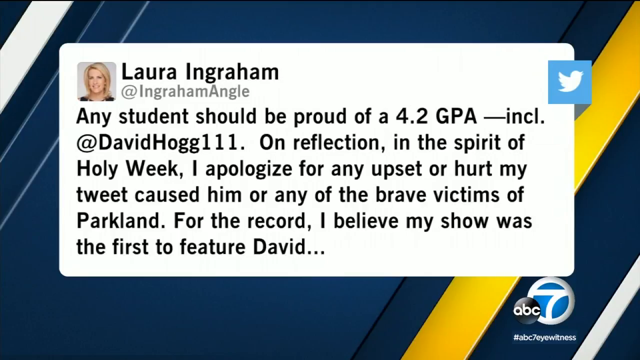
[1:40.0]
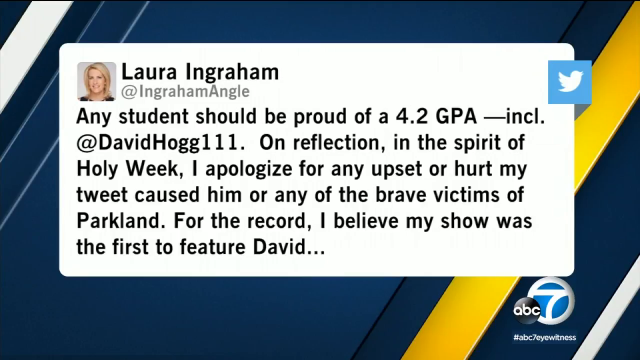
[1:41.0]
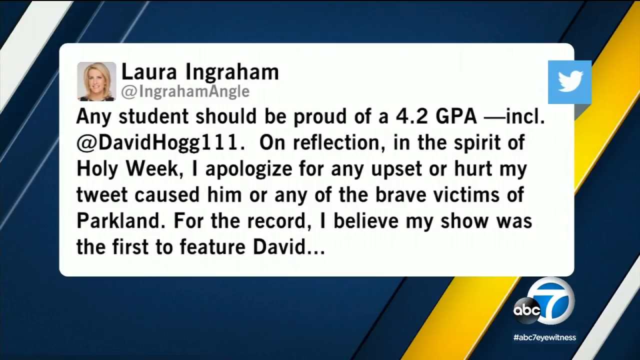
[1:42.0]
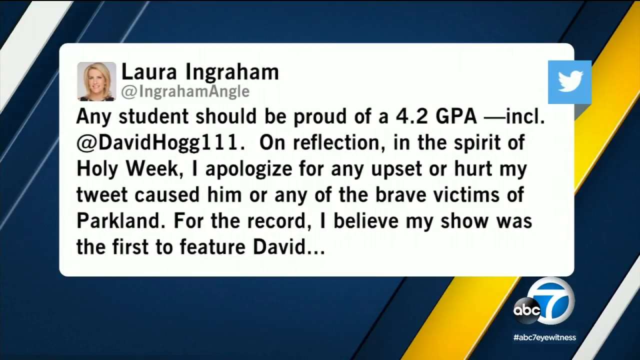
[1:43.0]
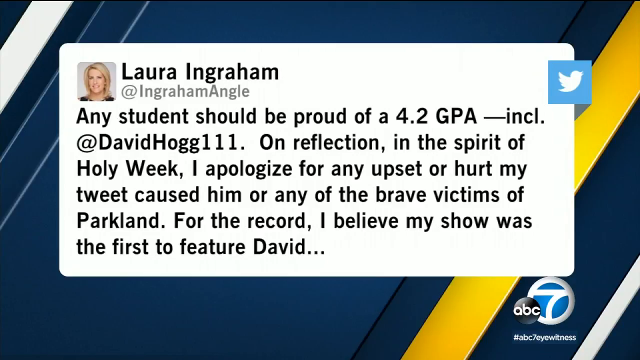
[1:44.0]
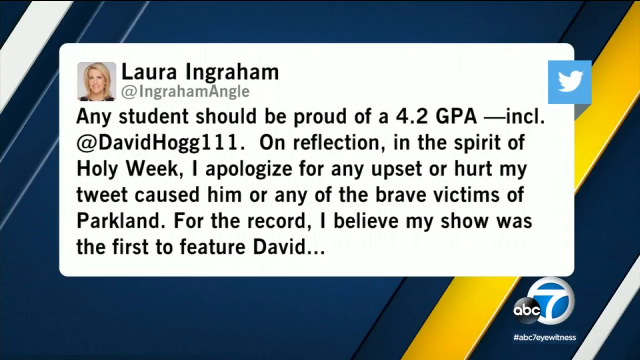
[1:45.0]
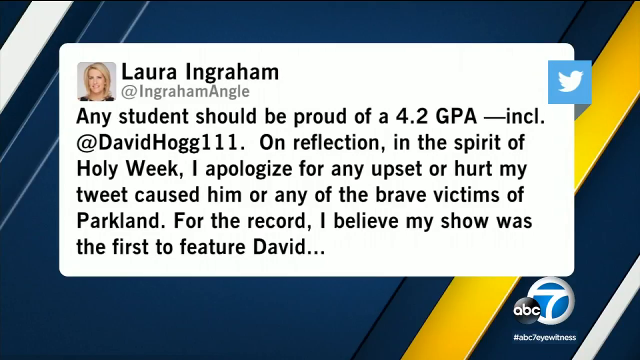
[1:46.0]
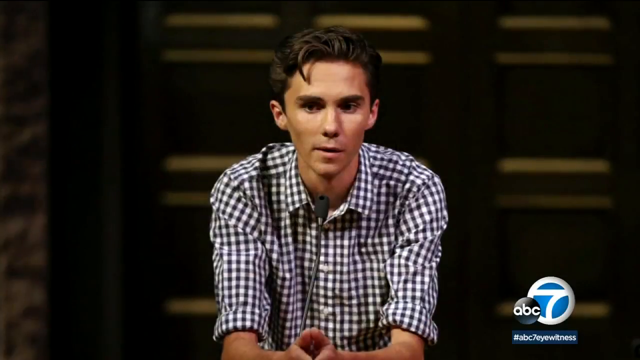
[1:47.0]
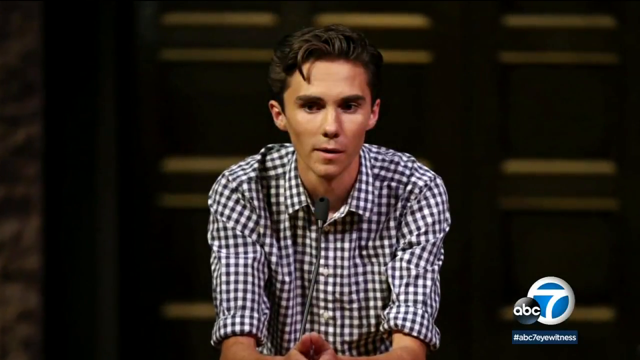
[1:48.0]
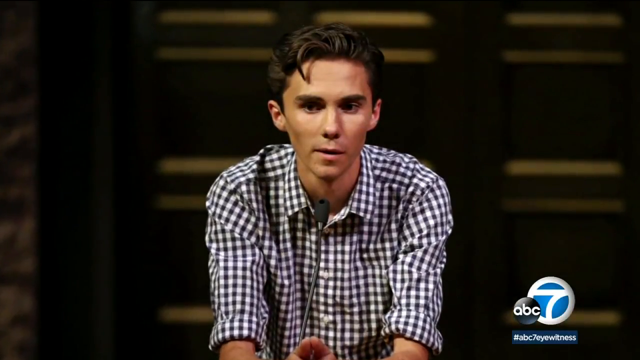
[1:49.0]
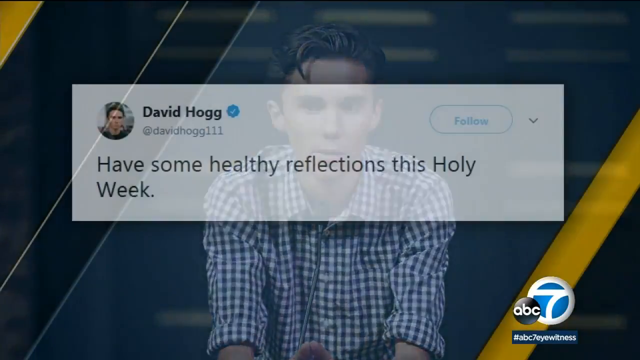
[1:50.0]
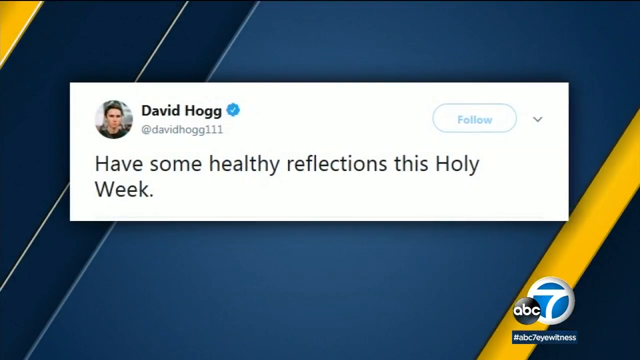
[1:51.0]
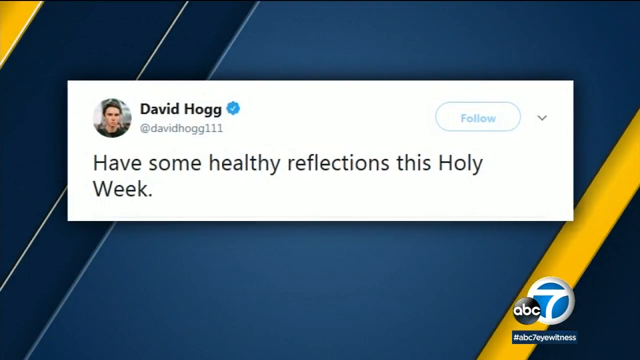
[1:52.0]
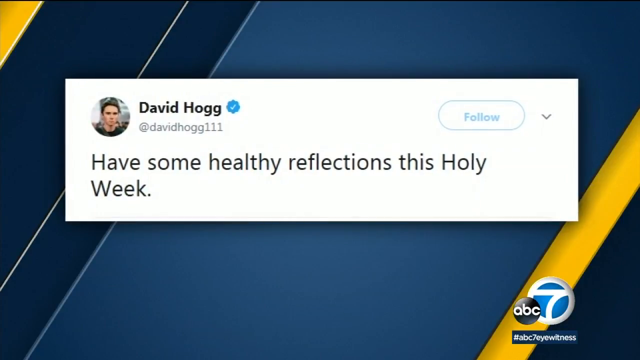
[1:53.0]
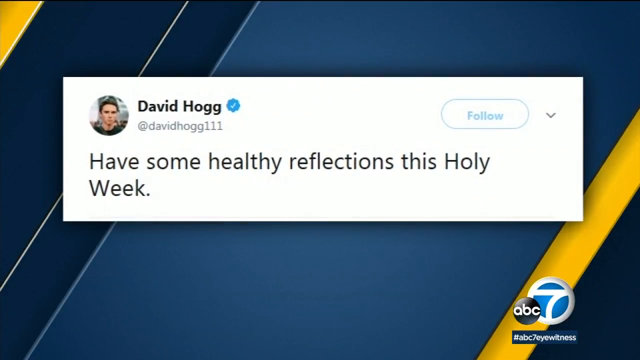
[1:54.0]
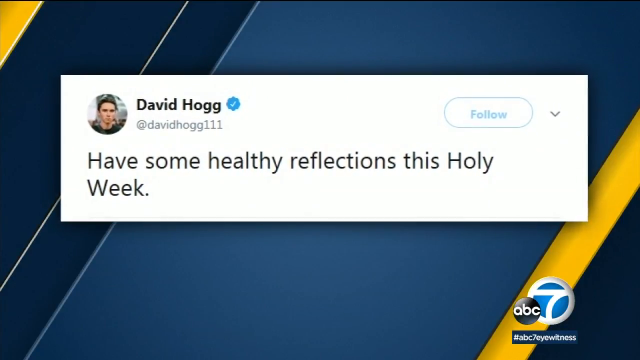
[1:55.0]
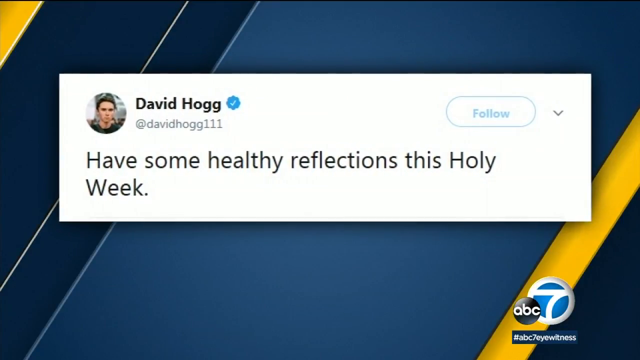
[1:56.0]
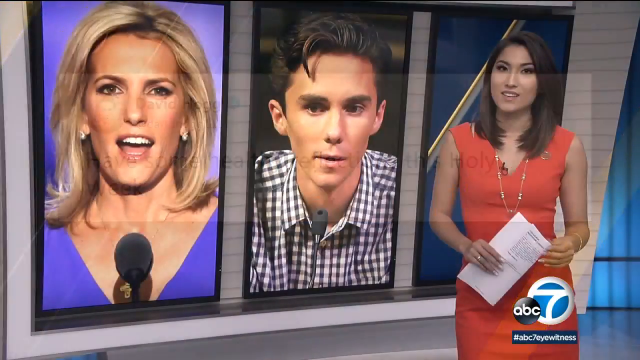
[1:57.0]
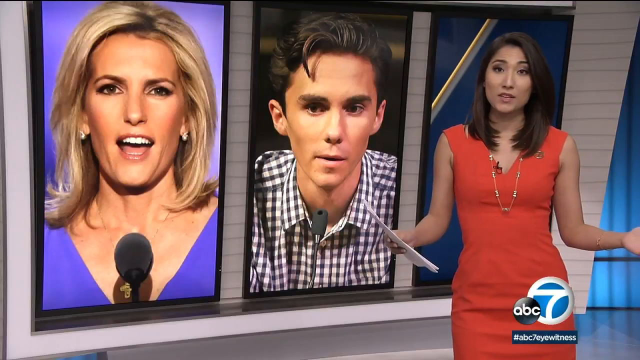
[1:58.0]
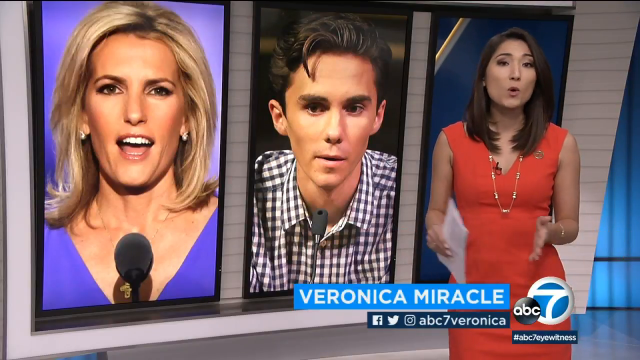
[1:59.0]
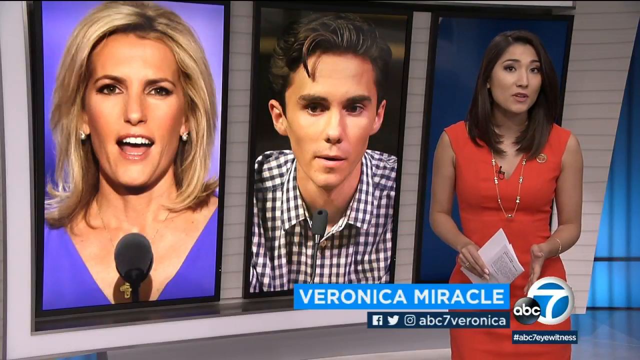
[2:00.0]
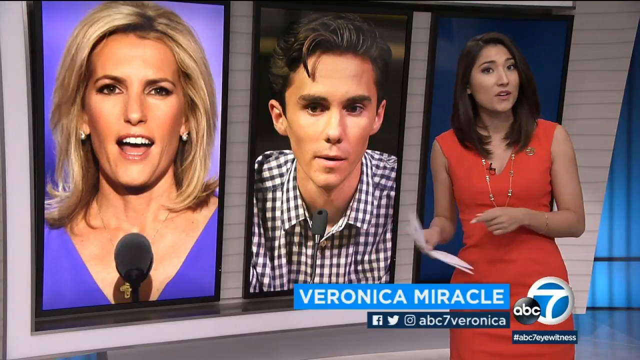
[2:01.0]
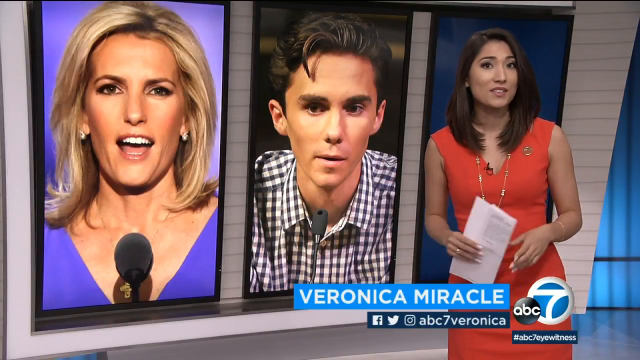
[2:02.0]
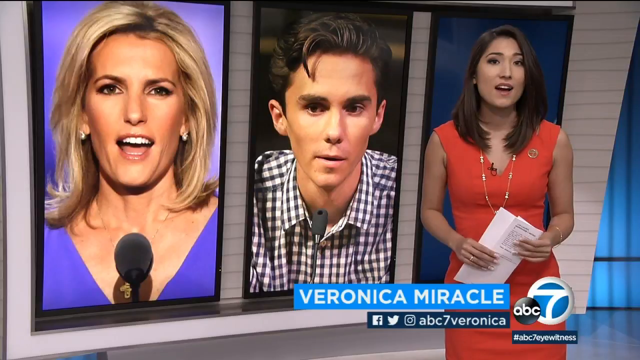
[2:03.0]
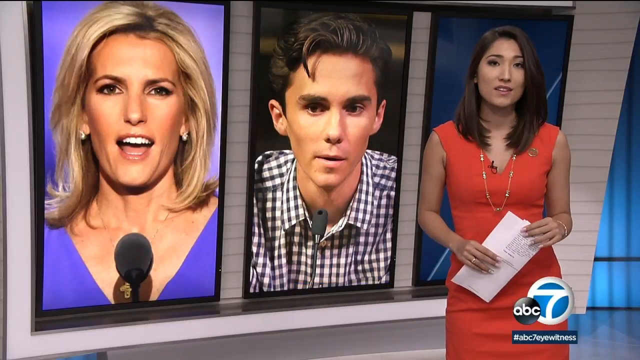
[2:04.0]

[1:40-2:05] Laura's Twitter shows text saying any student should be proud of a 4.2 GPA, including David Hogg, and "I apologize for any upset or hurt my tweet caused him or any of the brave victims of Parkland. For the record I believe my show was the first to feature David." Next, a picture of David is shown in a black and white t-shirt with boxes. David's Twitter post says "have some healthy reflection in this holy week". Veronica is shown again on the screen, with two people at the back, Laura and David, having a conversation on the news.